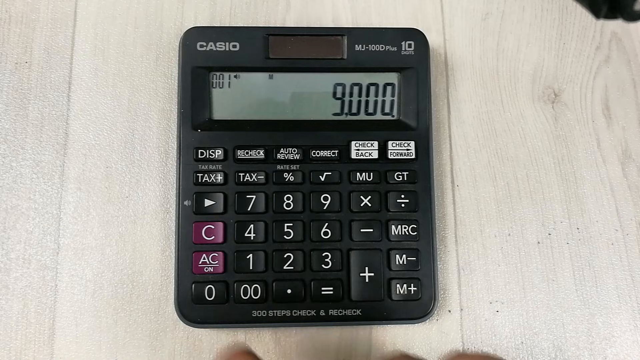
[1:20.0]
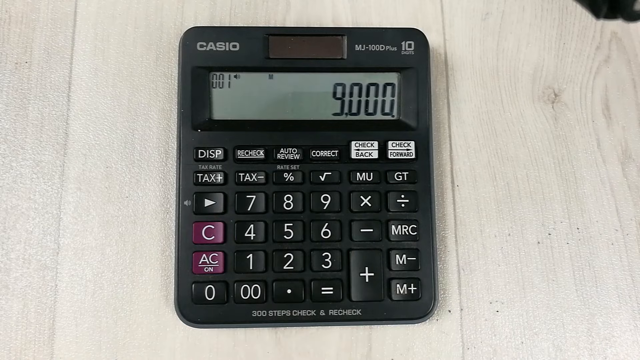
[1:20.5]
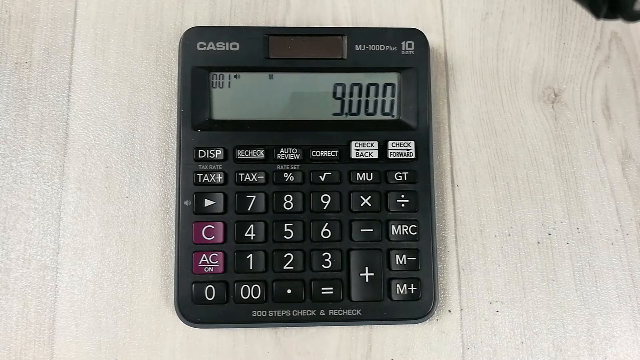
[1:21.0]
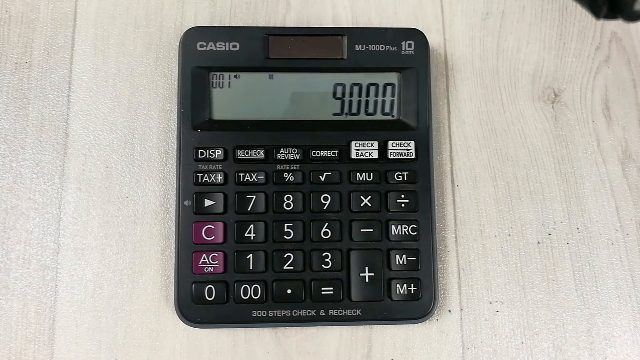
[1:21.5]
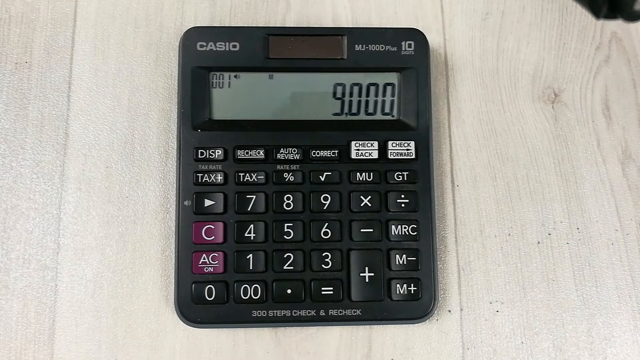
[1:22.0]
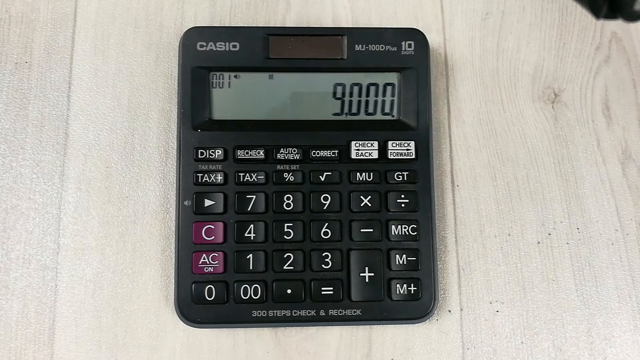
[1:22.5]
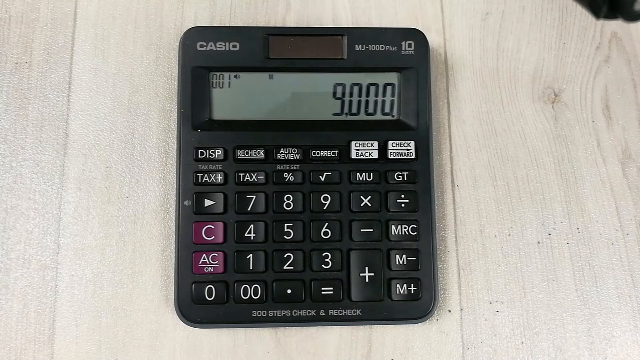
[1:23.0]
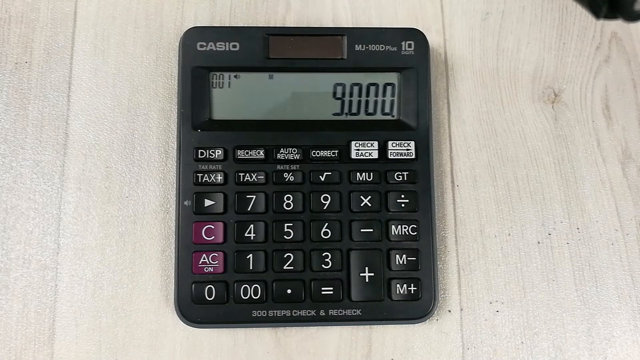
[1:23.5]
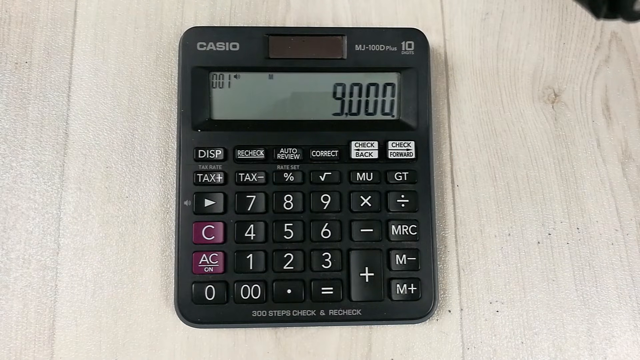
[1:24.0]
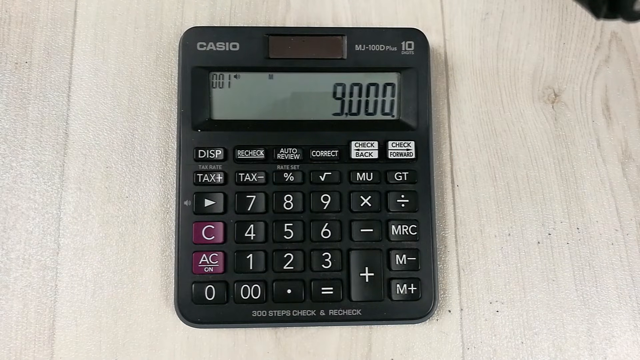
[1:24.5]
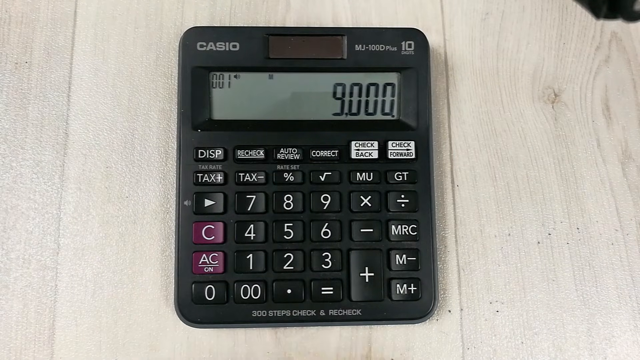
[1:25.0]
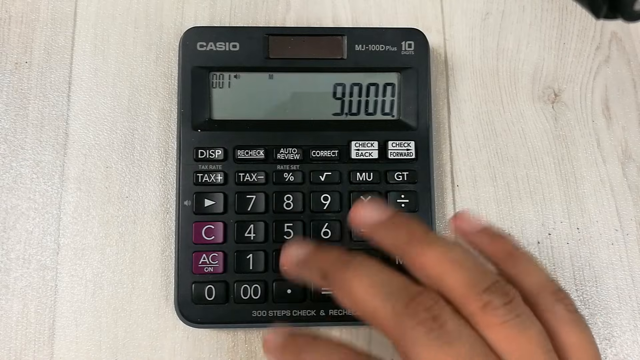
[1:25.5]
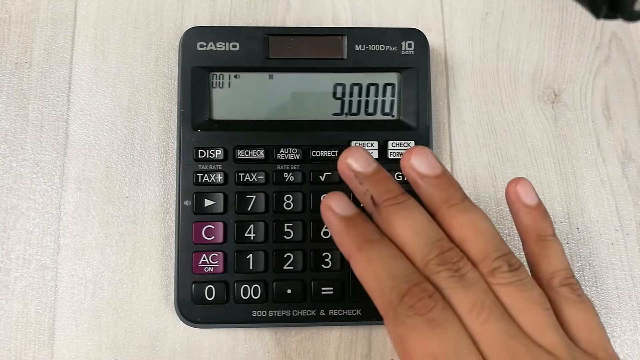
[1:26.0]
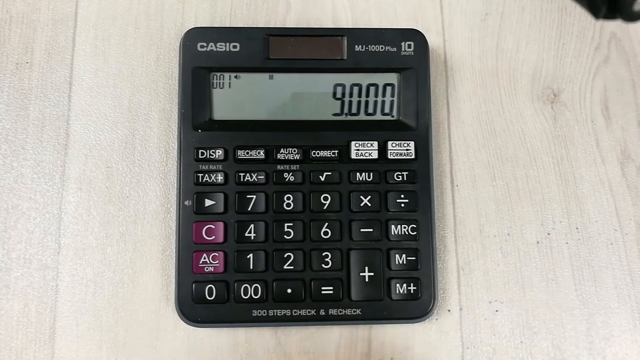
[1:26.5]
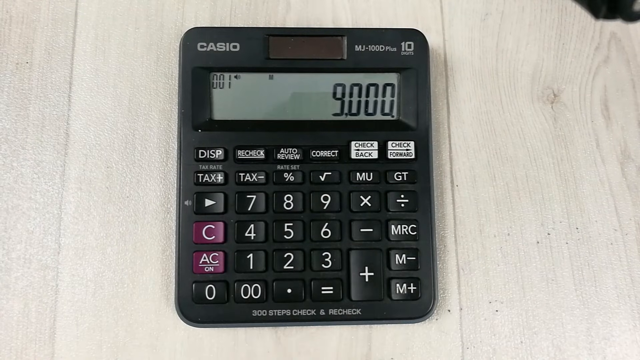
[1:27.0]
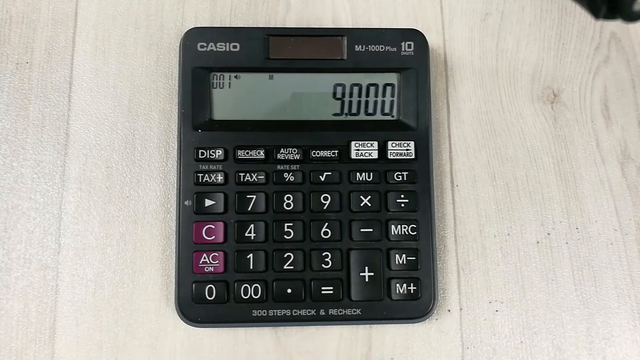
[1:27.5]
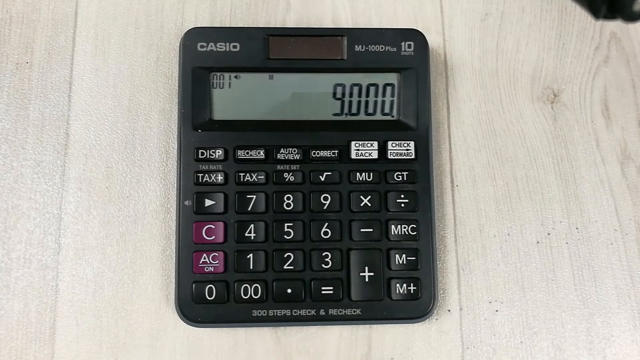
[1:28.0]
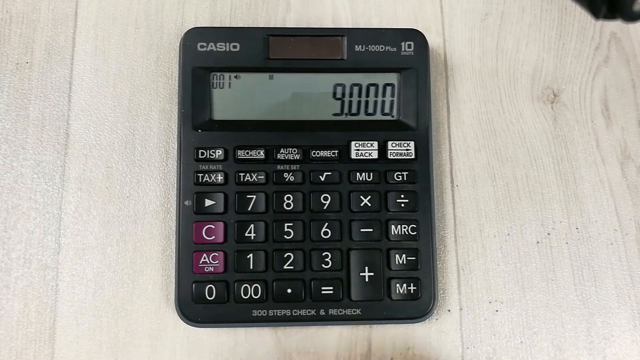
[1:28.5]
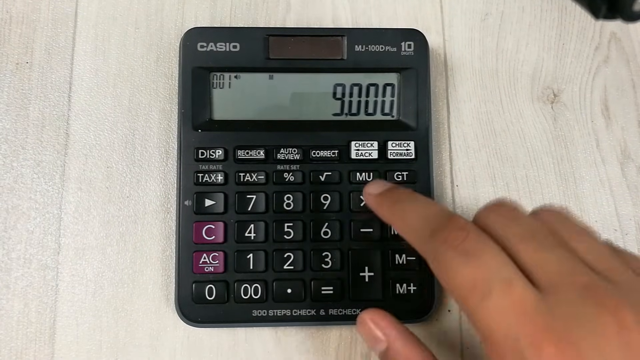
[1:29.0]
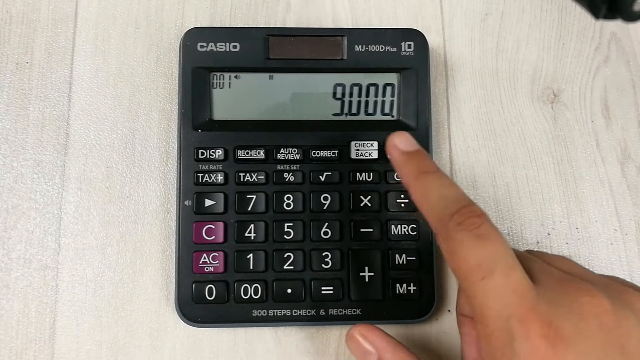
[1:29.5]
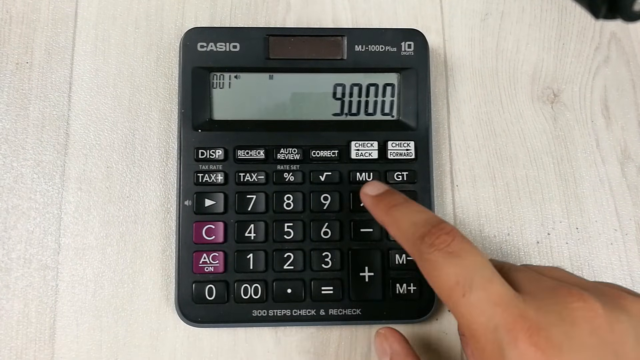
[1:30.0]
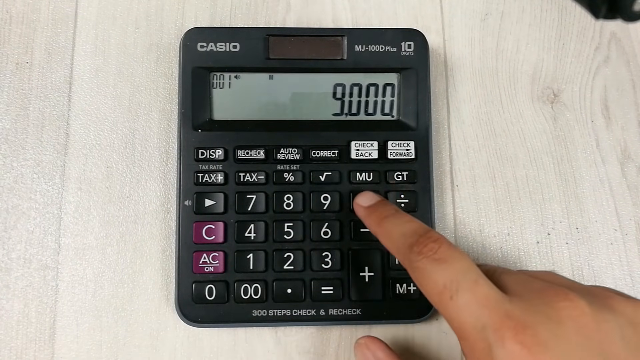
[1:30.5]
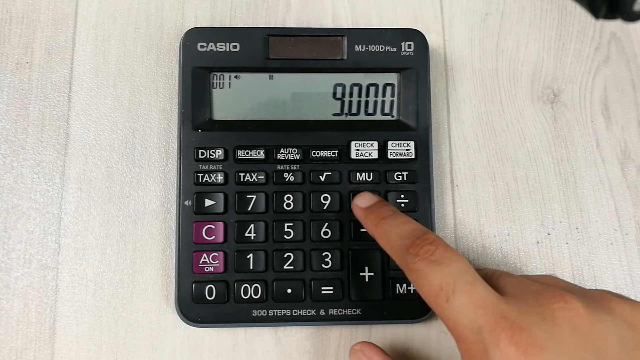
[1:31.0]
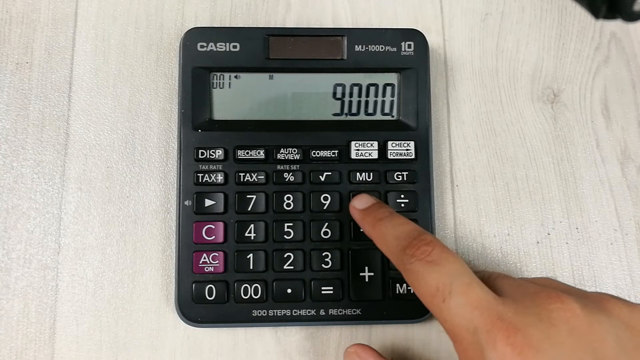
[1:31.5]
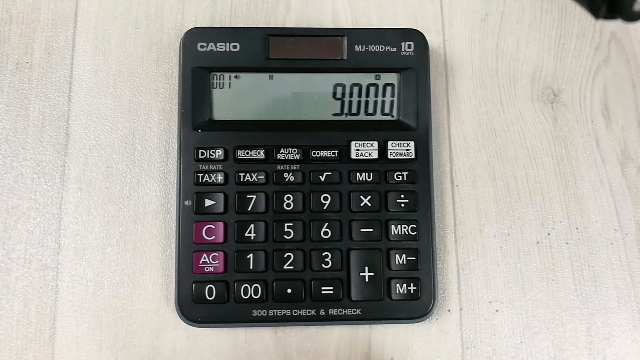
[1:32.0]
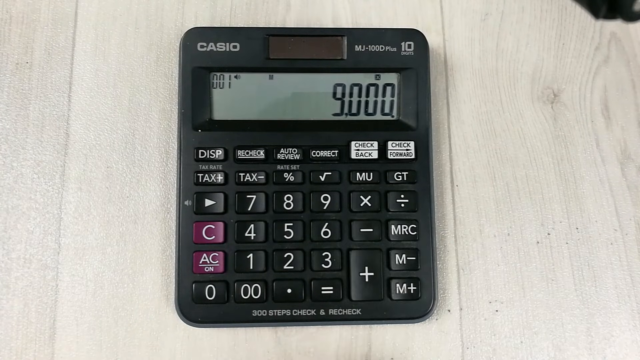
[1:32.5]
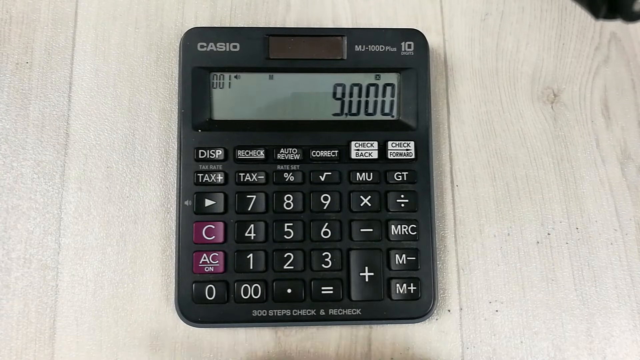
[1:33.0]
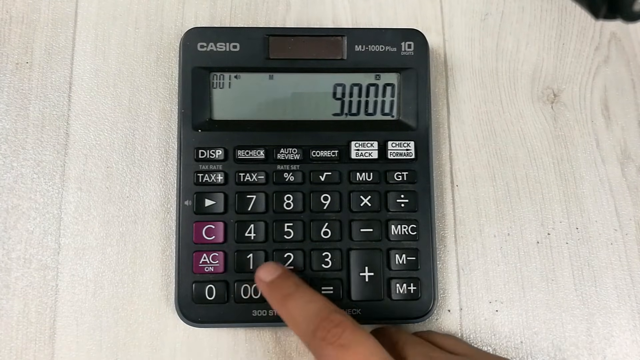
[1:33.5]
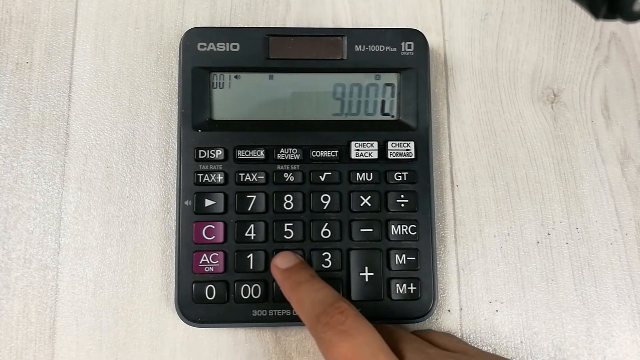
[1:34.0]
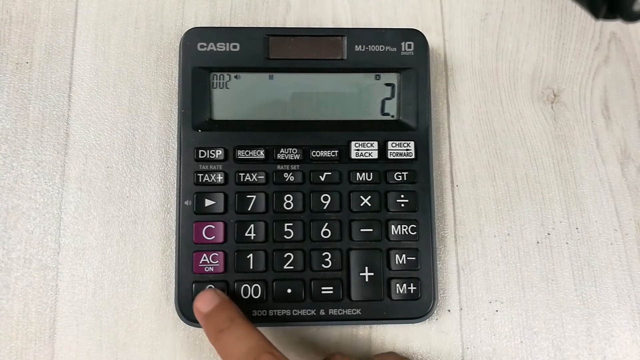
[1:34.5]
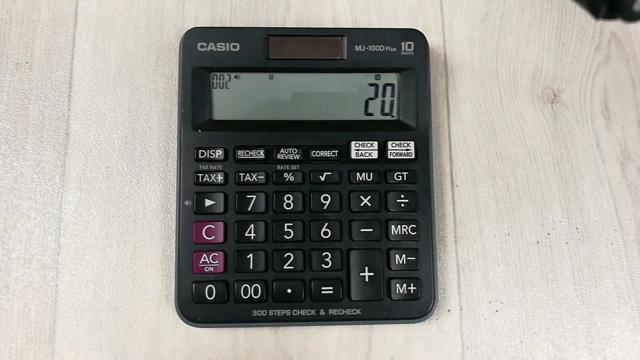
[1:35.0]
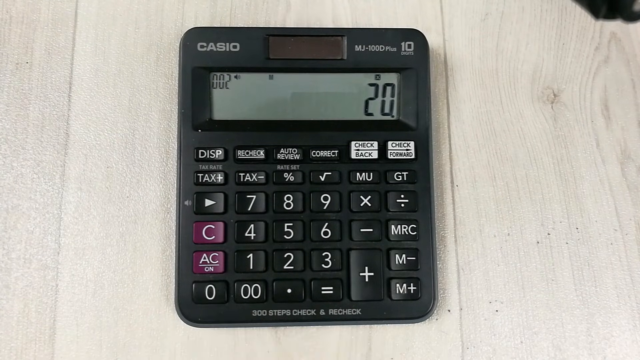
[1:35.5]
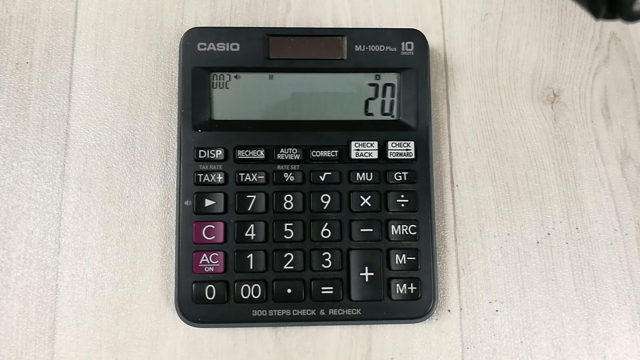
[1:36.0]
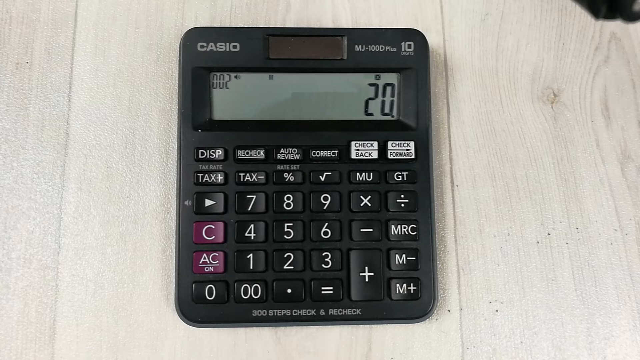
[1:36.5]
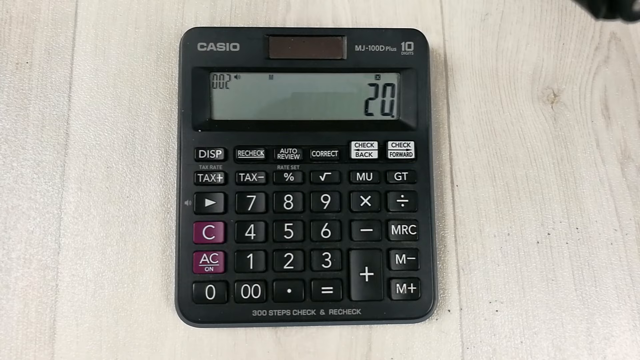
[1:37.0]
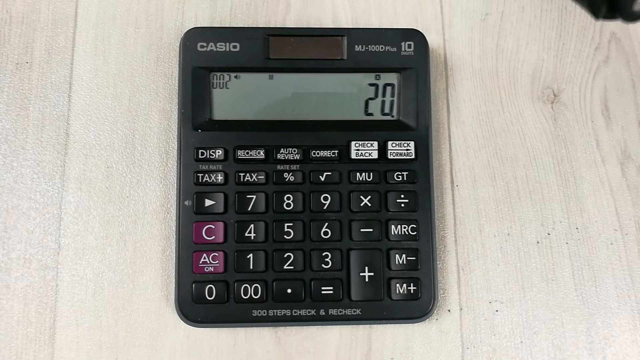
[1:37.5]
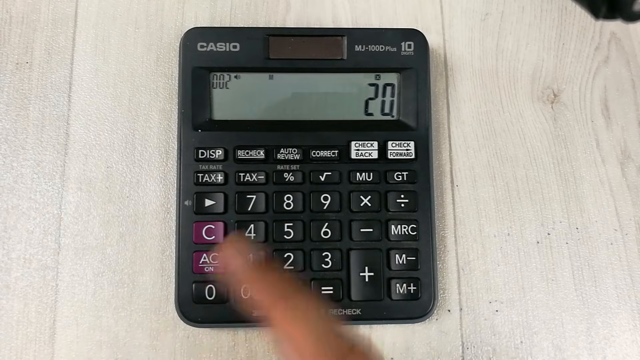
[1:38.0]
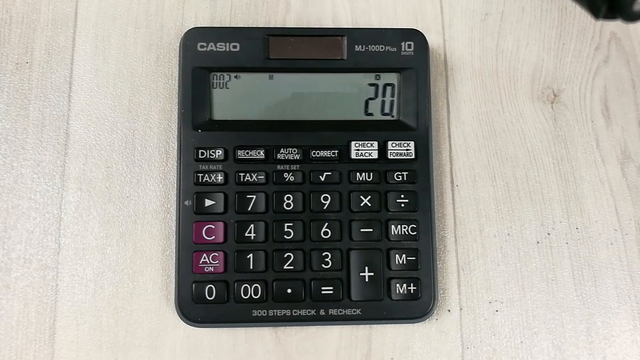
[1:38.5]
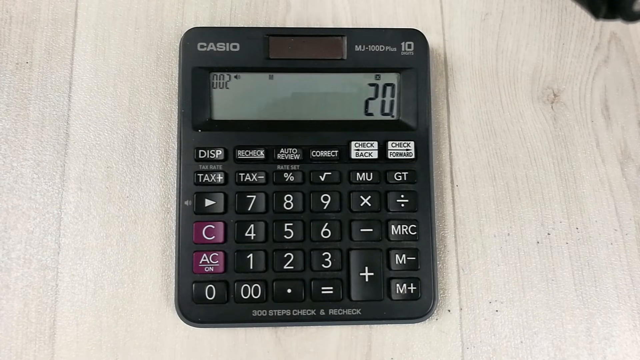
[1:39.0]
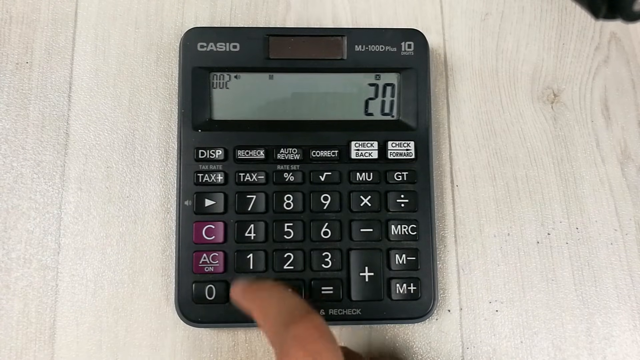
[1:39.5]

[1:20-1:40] The black Casio calculator sits on a wooden table with 9,000 on its display. At first the camera person's hands do not enter the shot. After a few seconds, the person brings a hand in, hovers over the calculator for a second, then pulls it away out of the shot. The person then uses their index finger to hit the multiplication button and, with the same finger, types two and zero, so the calculator displays 20. Their finger enters the shot very quickly and leaves, and then the person reaches for the number 8. It is a single shot with no cuts, from the same top-down camera angle on the calculator.